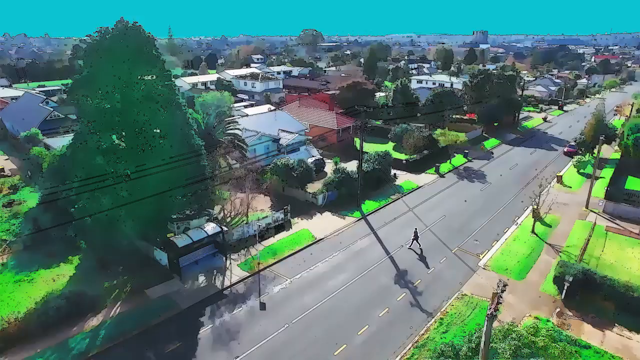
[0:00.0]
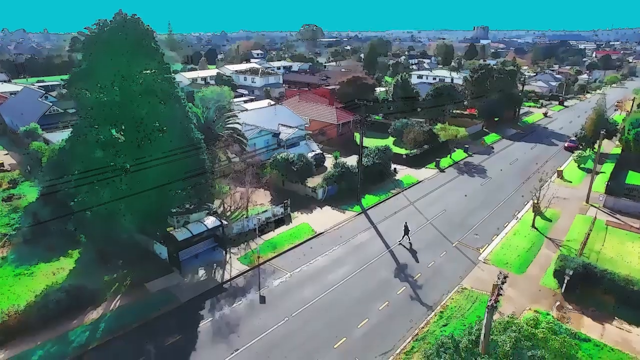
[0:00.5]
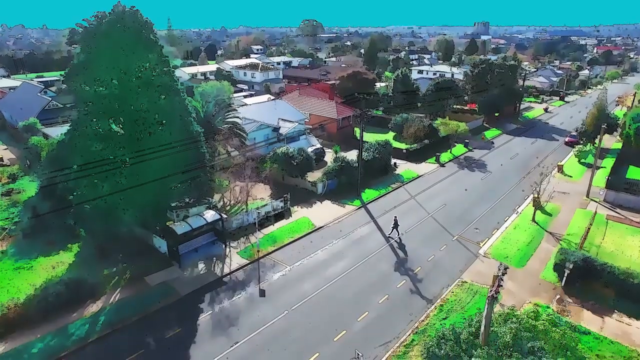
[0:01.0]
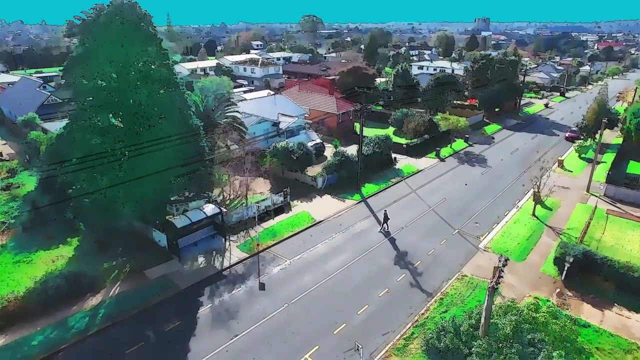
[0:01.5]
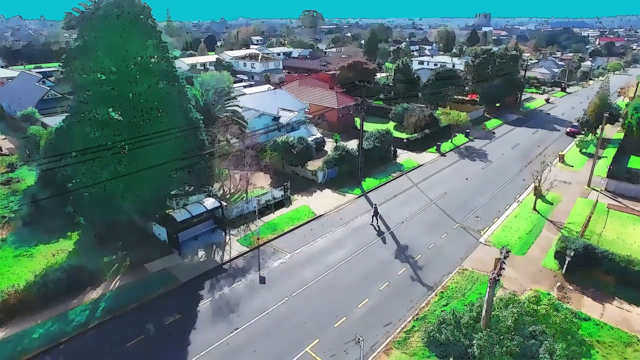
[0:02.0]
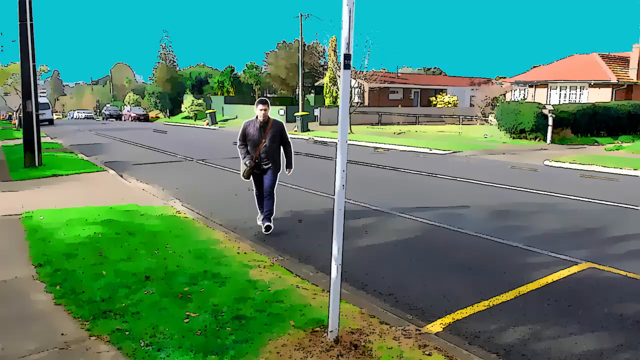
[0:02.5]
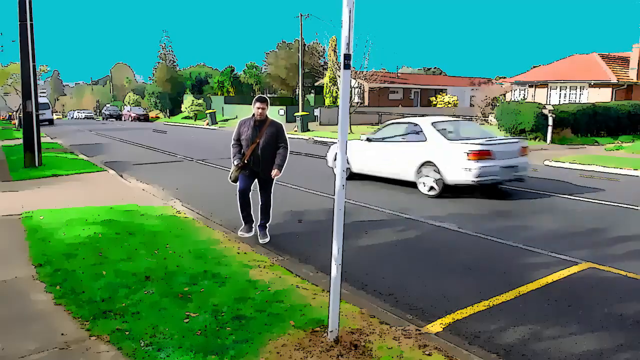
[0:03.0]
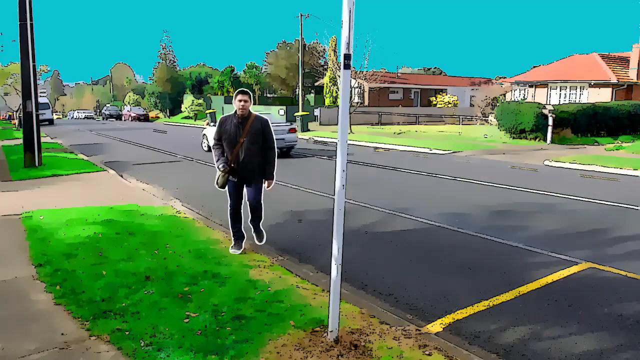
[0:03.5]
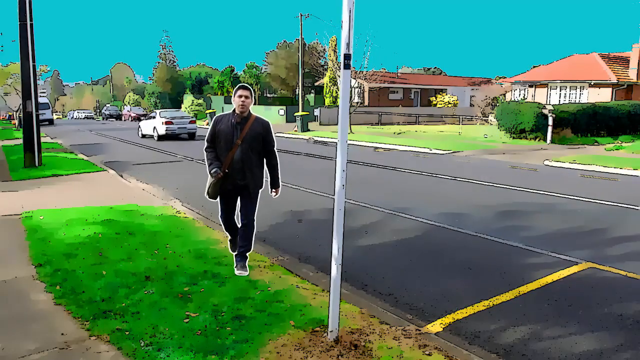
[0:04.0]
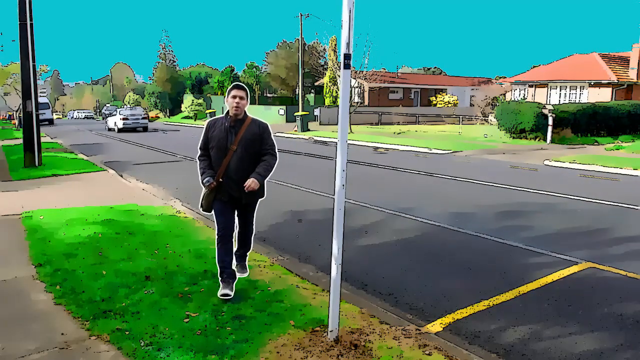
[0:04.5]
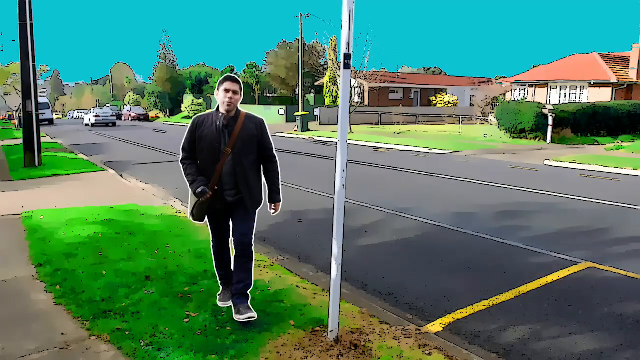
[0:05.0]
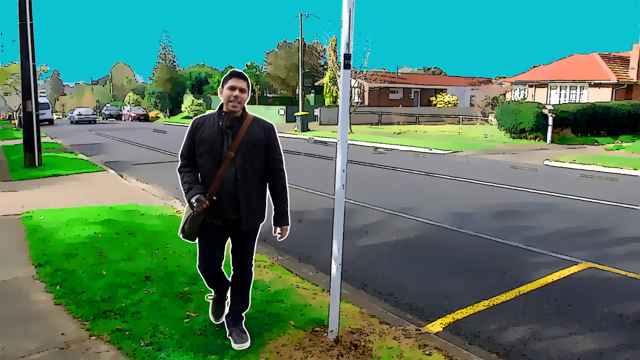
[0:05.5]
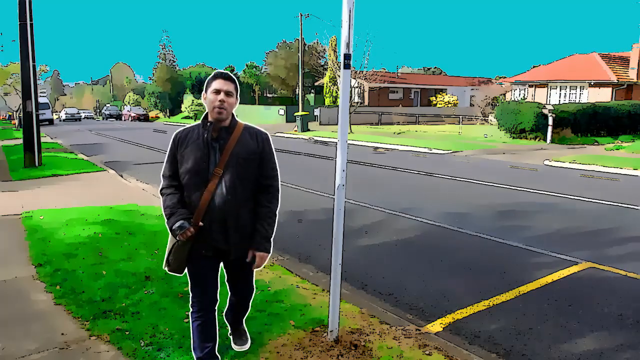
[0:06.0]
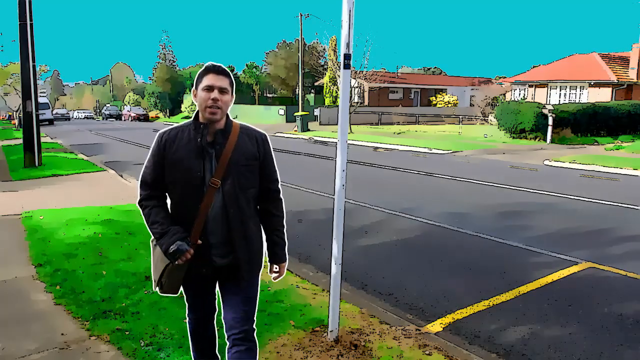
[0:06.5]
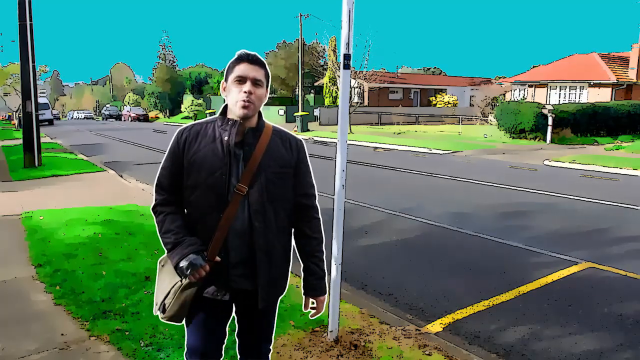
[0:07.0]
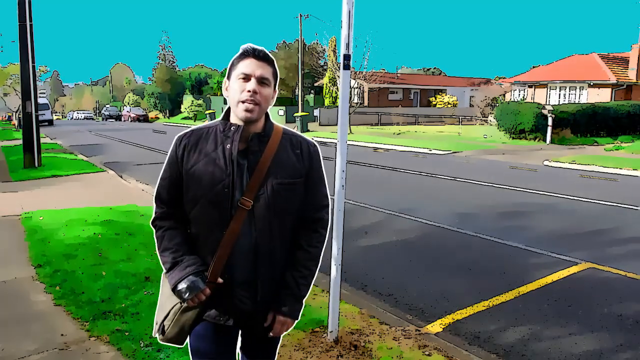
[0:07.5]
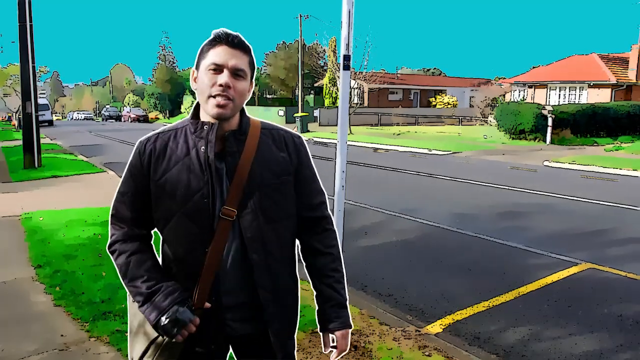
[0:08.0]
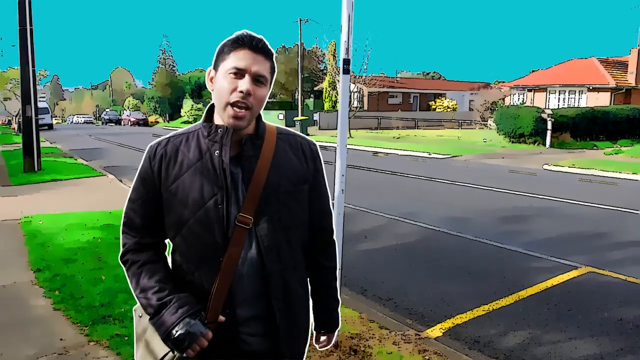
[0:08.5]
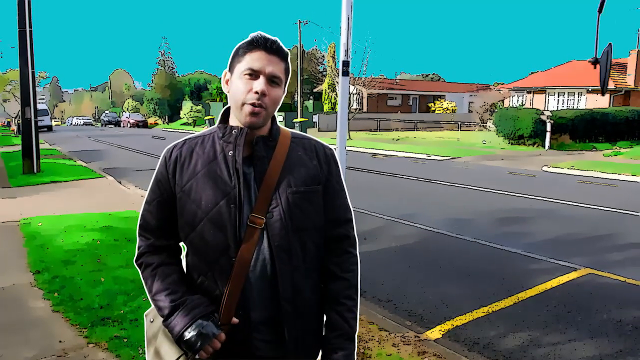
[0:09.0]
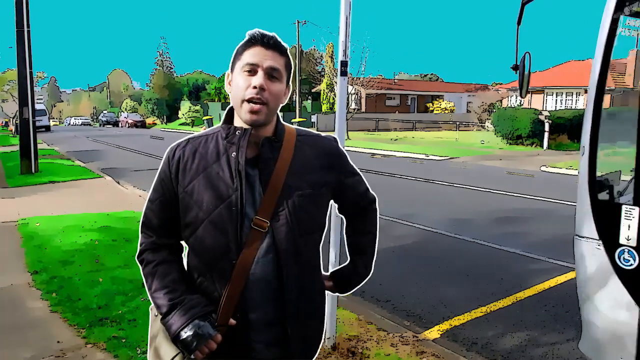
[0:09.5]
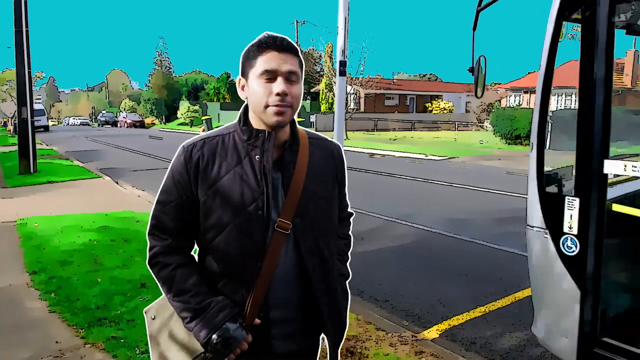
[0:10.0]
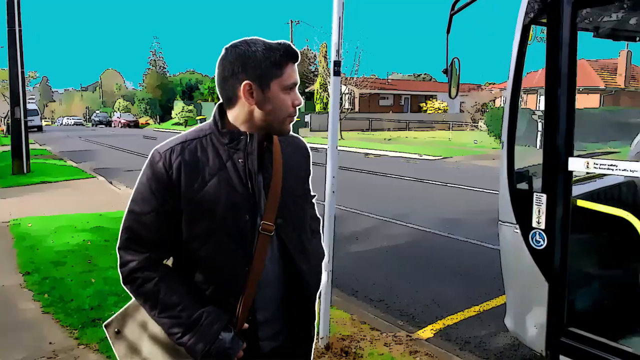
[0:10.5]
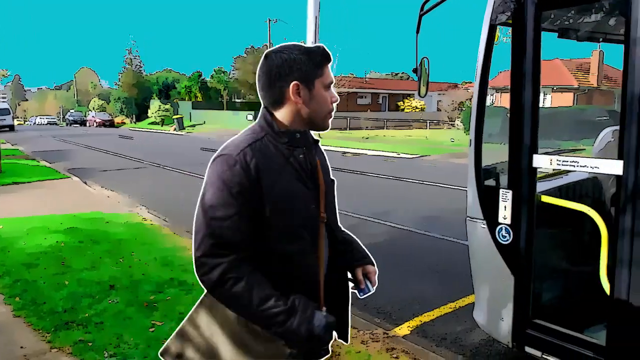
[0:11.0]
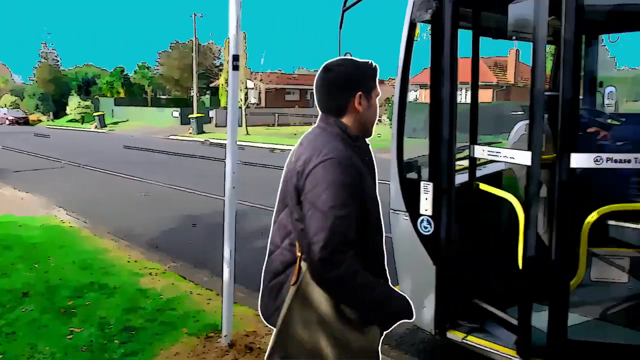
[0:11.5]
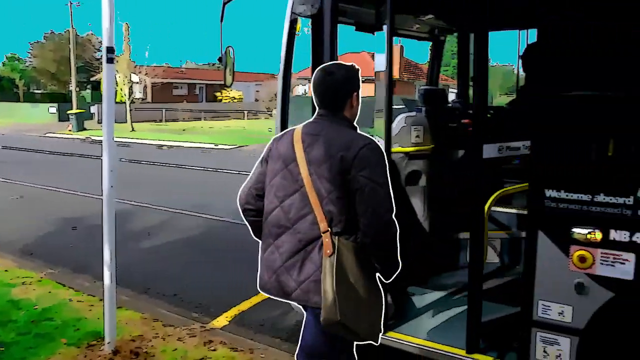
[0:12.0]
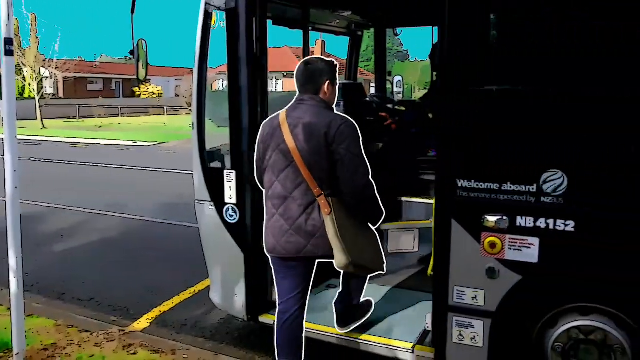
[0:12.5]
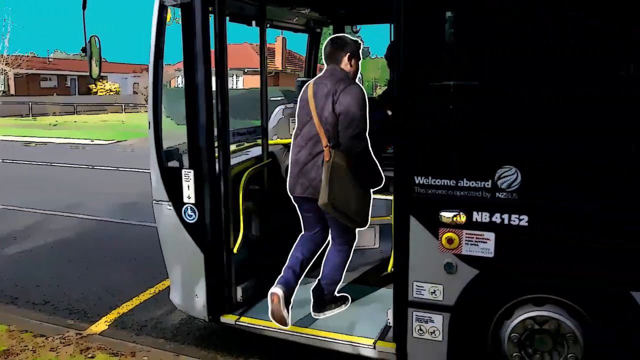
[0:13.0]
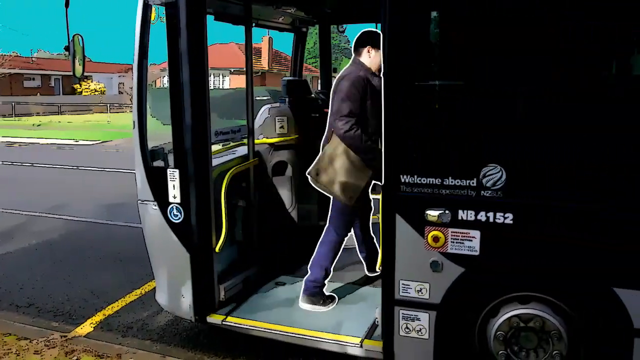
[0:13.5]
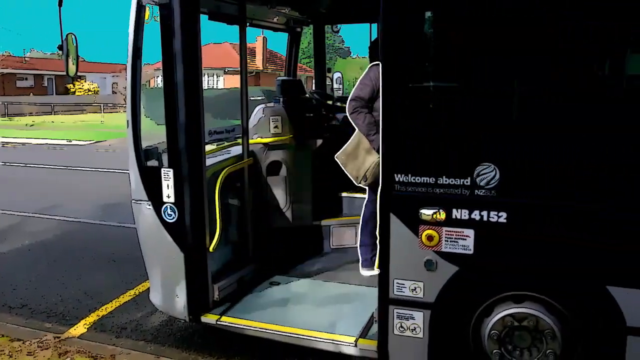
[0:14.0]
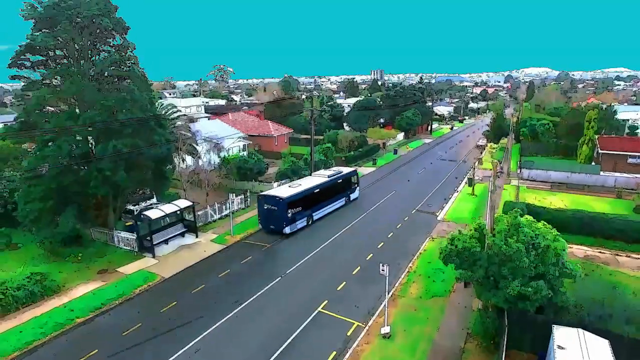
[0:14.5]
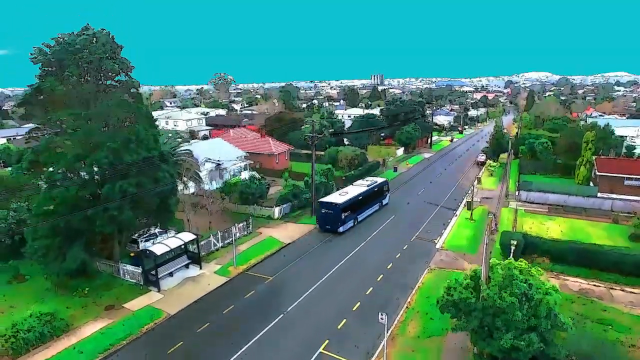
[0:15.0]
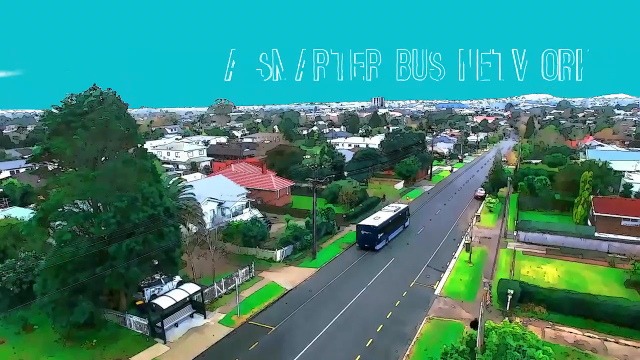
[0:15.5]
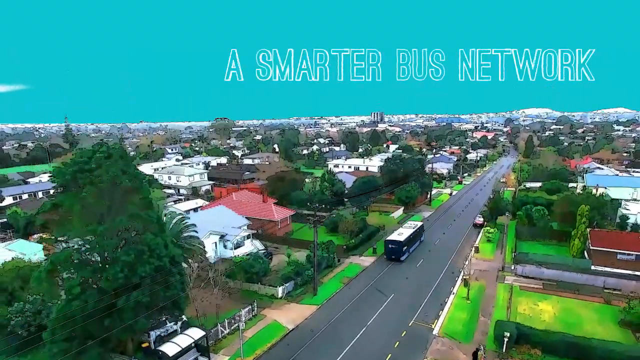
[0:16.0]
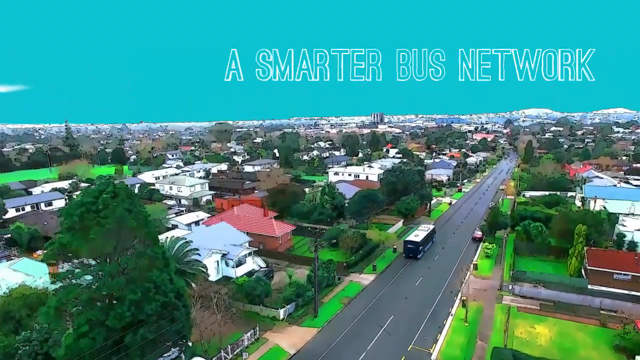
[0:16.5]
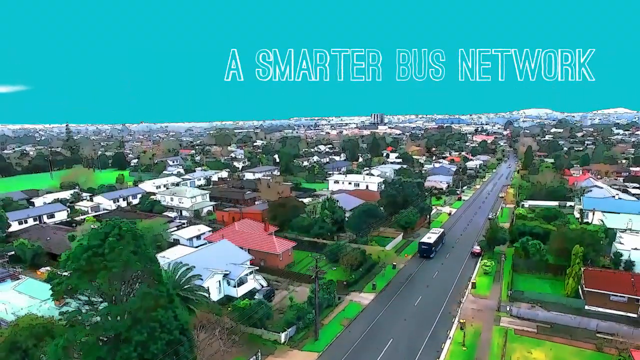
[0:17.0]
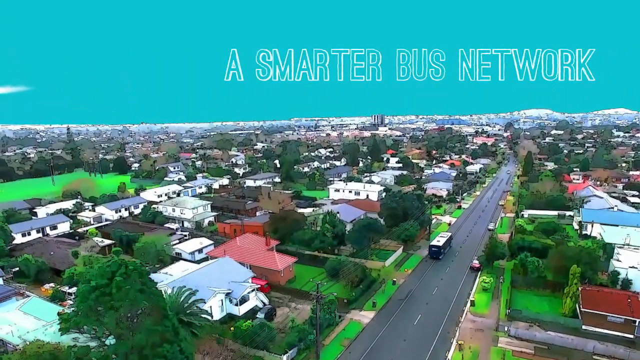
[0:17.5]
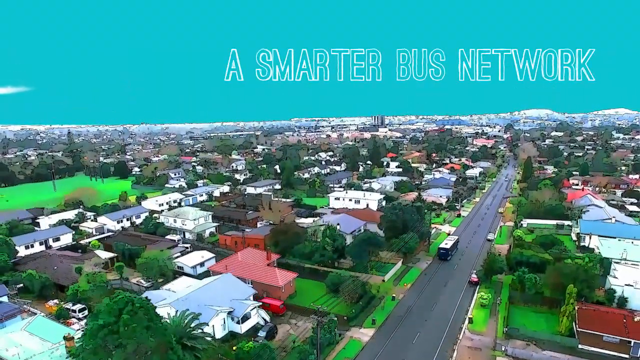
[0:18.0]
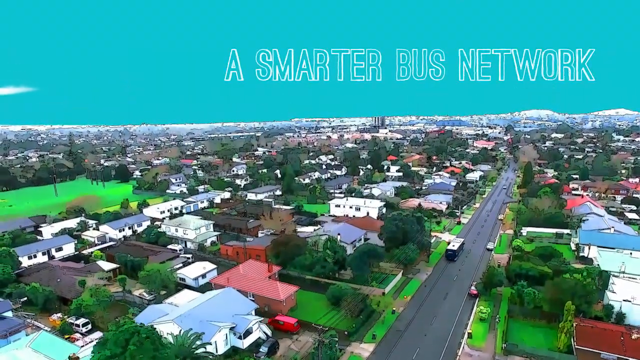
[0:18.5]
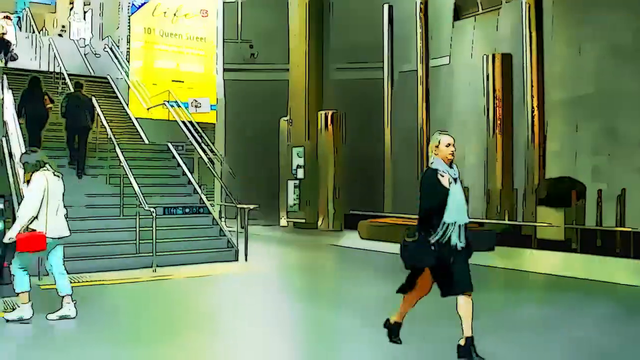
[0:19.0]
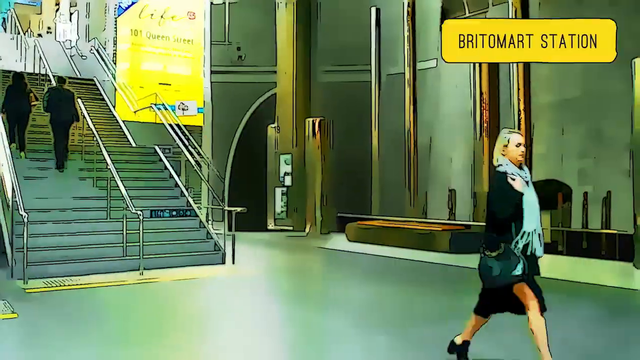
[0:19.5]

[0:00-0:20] A person walks across a road in a residential area with homes on either side. A mature tree stands at the property on the far left. Each side of the road has a pavement, with some additional grass area between the drives, and there are trees on the grass outside the properties on the left-hand side. The homes are mostly single storey, and a more built-up area is visible in the distance. The person reaches the pavement; he is a man, and as a white car drives past he can be seen wearing blue jeans and a brown jacket, with a shoulder bag over his shoulder and brown hair. He comes towards the camera as the car moves into the distance, and he seems to have a white halo or drawn line around his body and bag. He talks to the camera as he approaches, then stops close to the camera. A white bus pulls up to the bus stop next to him. He puts his hand in his pocket, turns to the bus, gets out his bus pass or credit card, and steps onto the bus when the doors open. He shows his card, and the bus sets off; from the back it is a blue bus, and it seems to be heading towards the more built-up area. A title appears in the sky area saying "a smarter bus network", and the shot moves to an aerial view. Then a bus station called Britomart station appears, with steps up to another level, and a woman strides across the front area.